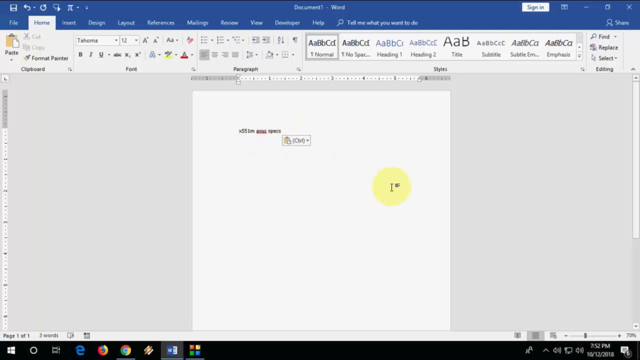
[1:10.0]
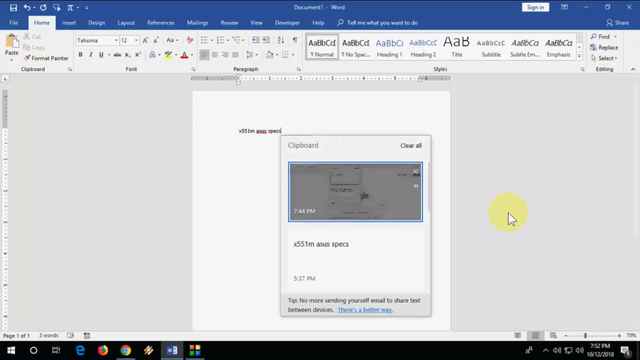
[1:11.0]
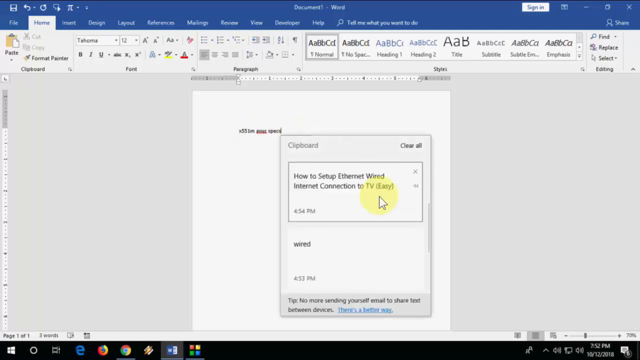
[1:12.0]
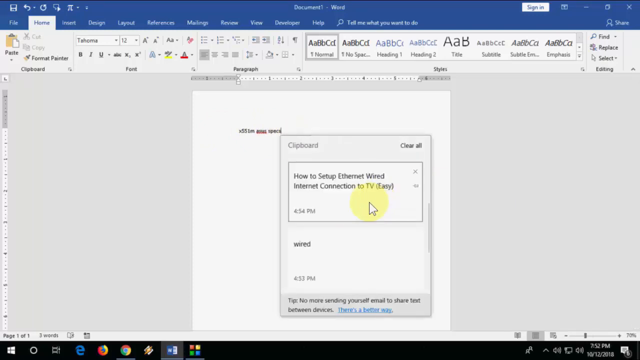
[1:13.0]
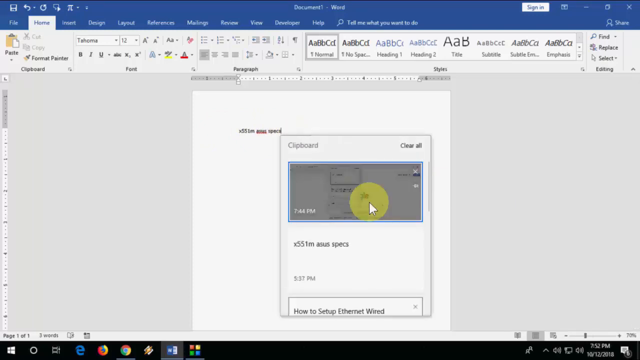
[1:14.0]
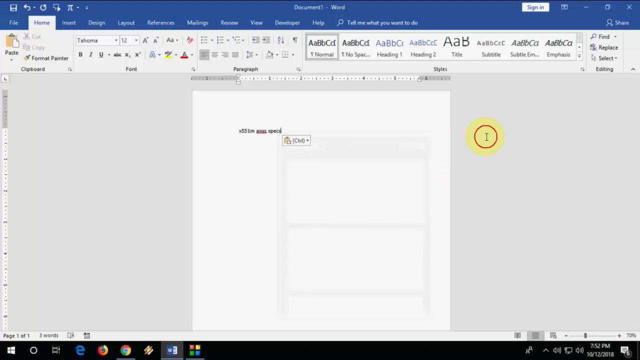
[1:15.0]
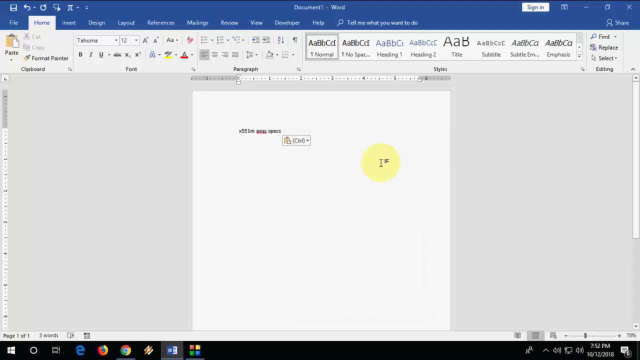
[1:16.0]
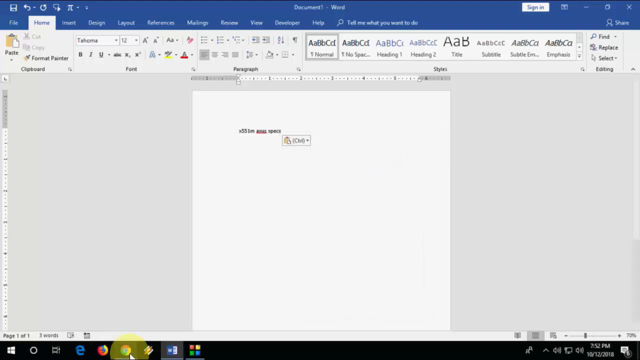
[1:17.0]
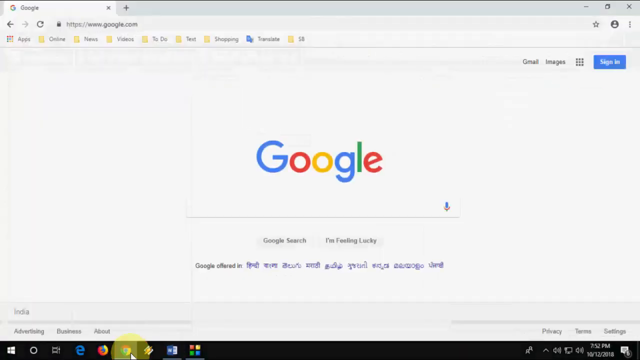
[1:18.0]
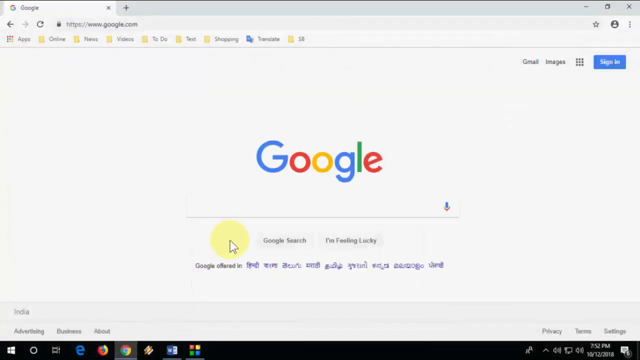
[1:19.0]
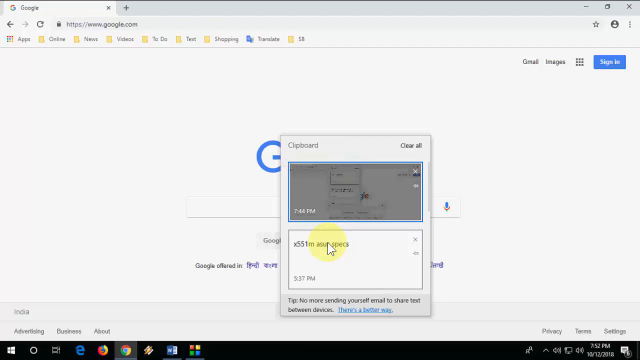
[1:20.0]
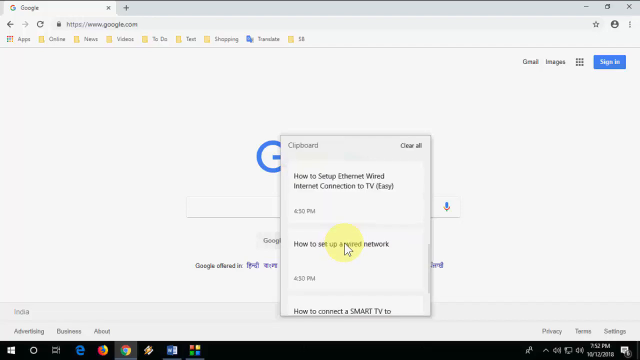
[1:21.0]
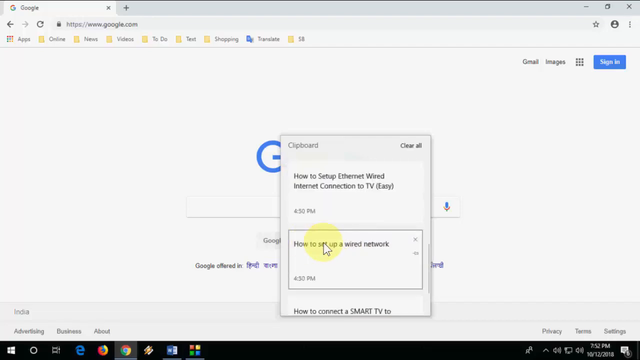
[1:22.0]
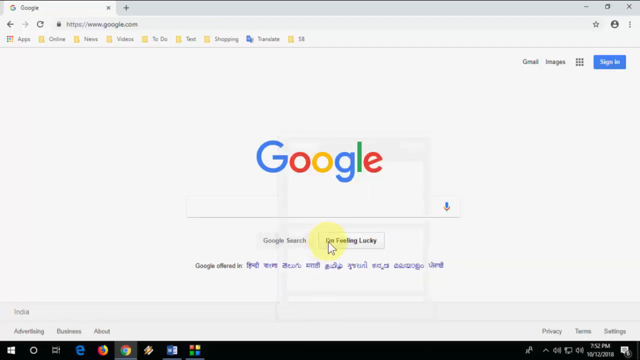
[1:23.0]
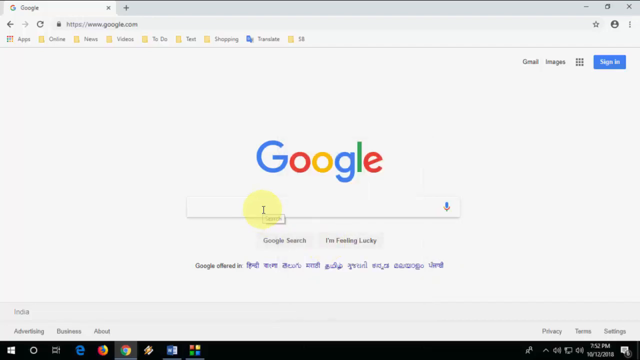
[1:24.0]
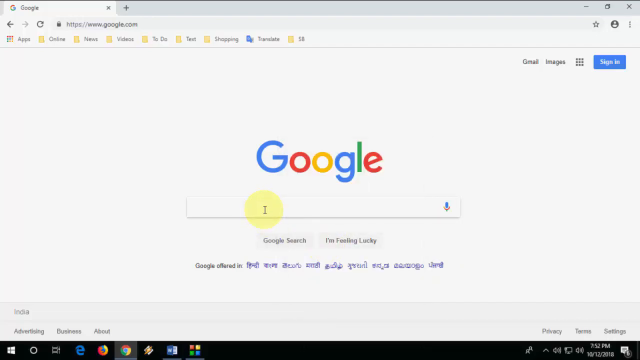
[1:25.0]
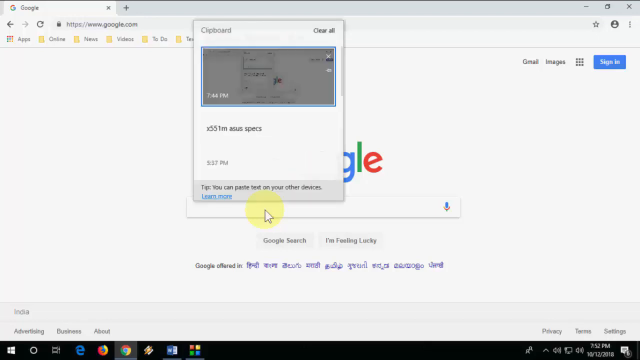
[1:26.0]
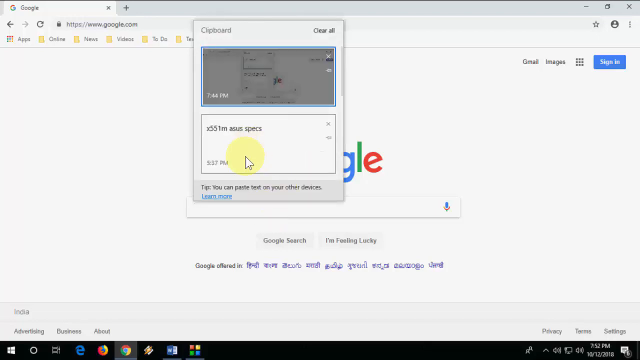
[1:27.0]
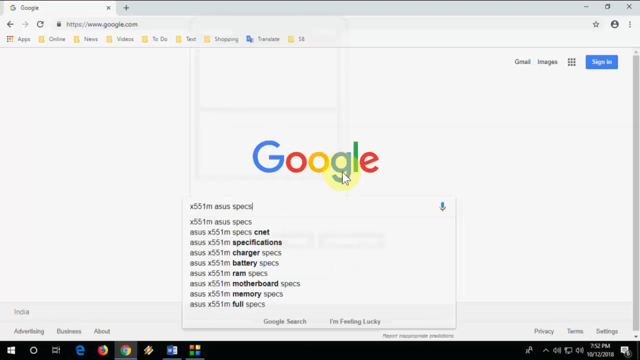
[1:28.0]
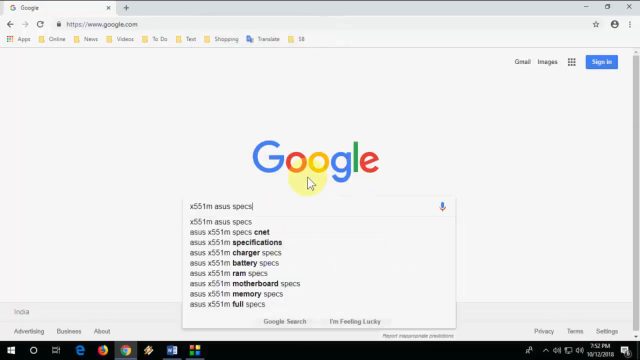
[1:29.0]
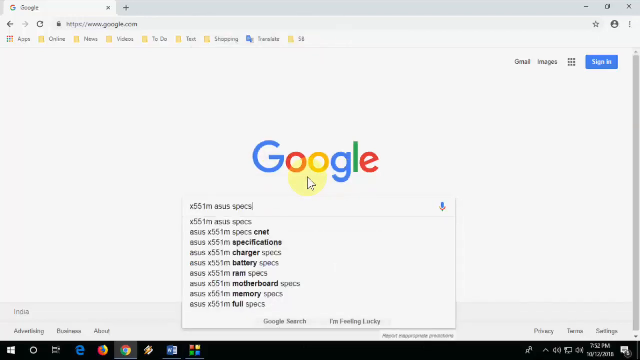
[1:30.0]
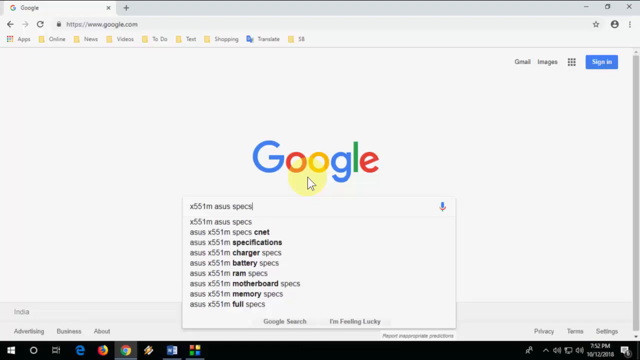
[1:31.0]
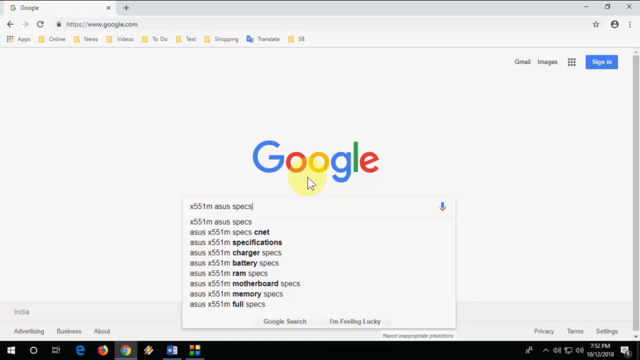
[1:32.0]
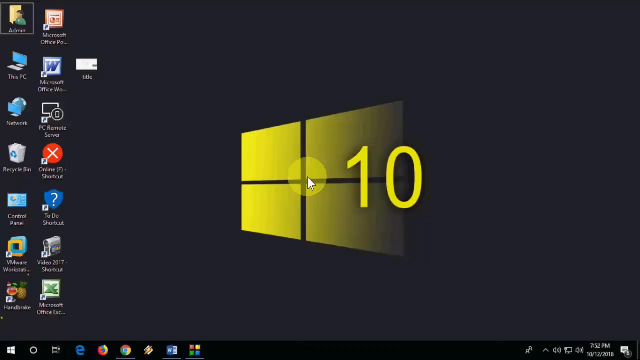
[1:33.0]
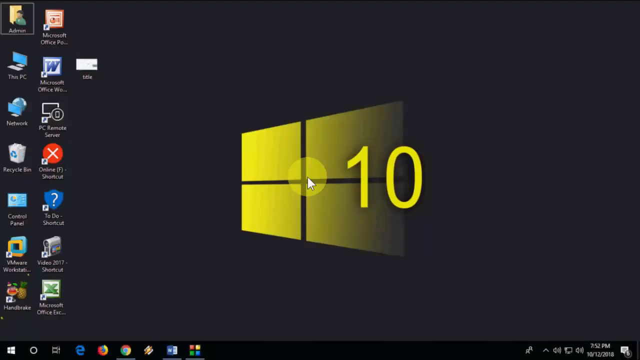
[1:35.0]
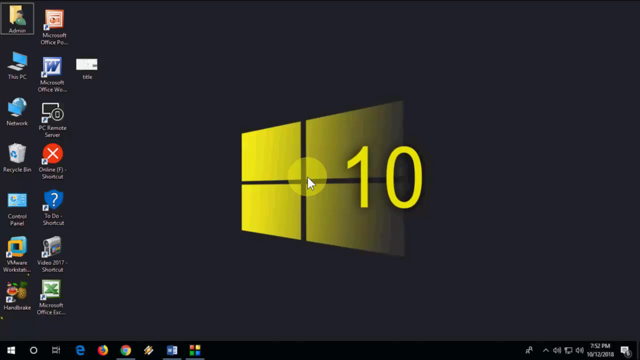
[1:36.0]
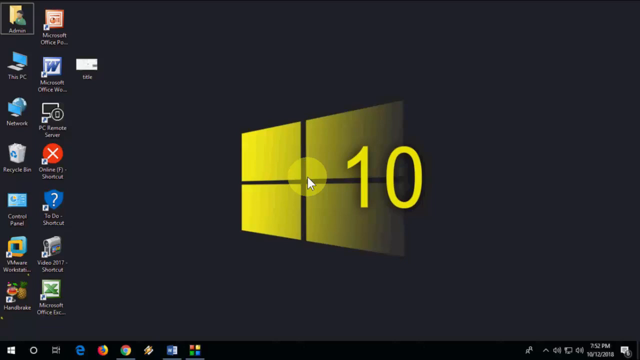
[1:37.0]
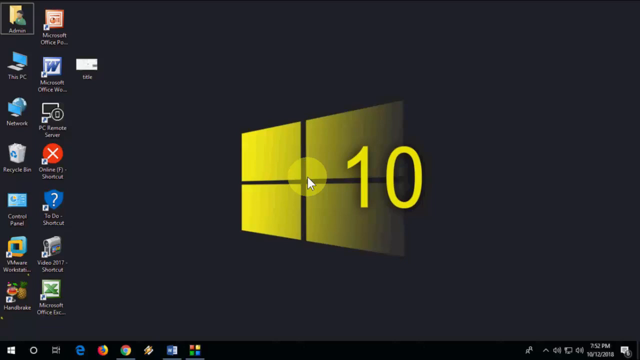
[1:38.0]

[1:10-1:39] More of the clipboard history and the items stored in it are shown. The person then navigates to a web browser, opens google.com and pastes other information that was also stored in the clipboard history. There are no physical subjects; the setting is within the Windows 10 operating system, moving between a few different applications while highlighting the clipboard feature.